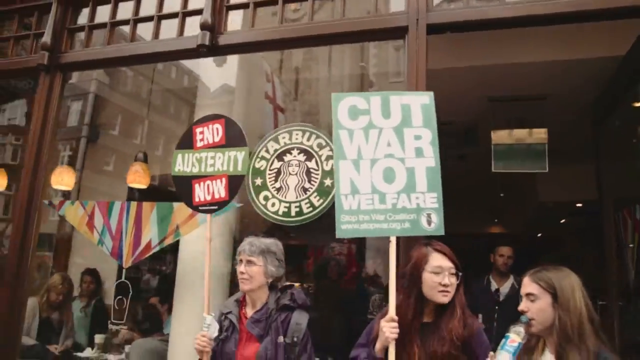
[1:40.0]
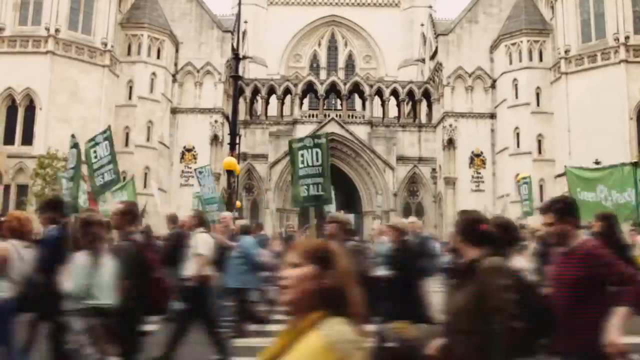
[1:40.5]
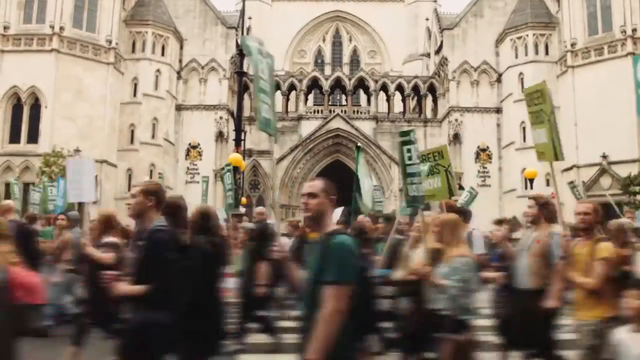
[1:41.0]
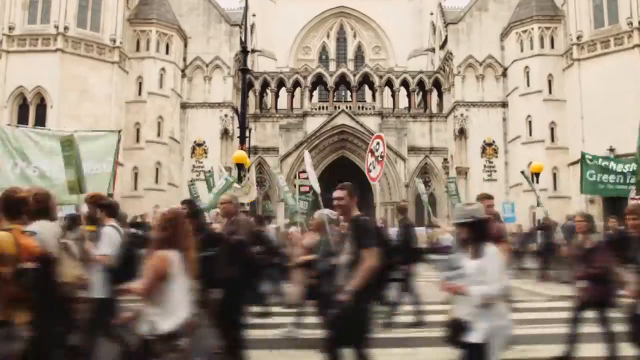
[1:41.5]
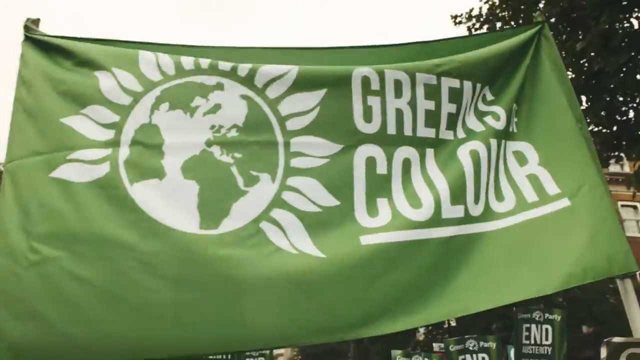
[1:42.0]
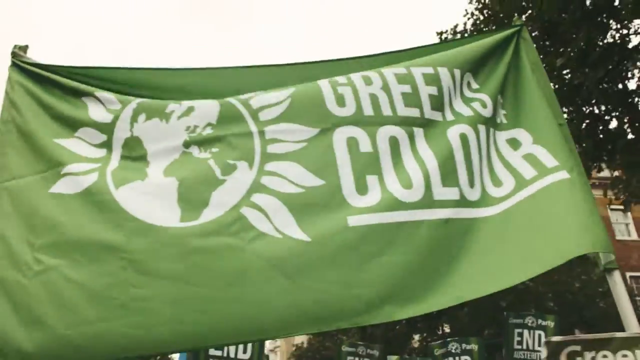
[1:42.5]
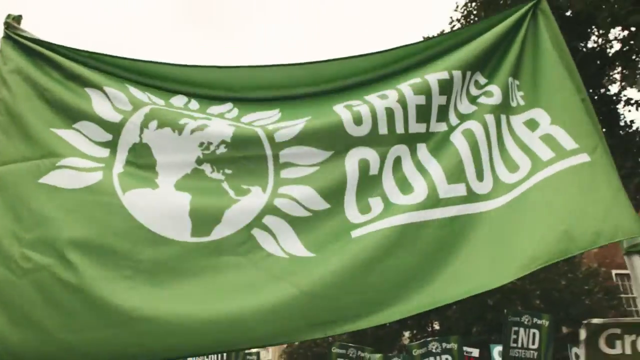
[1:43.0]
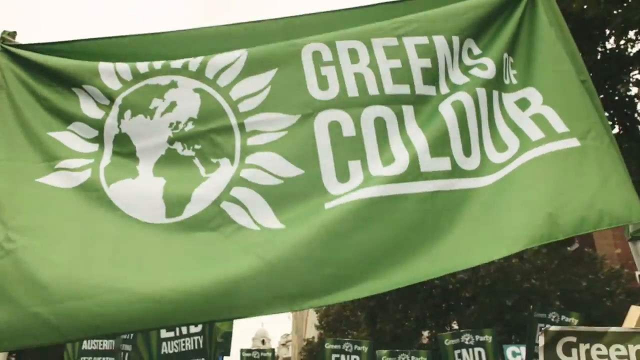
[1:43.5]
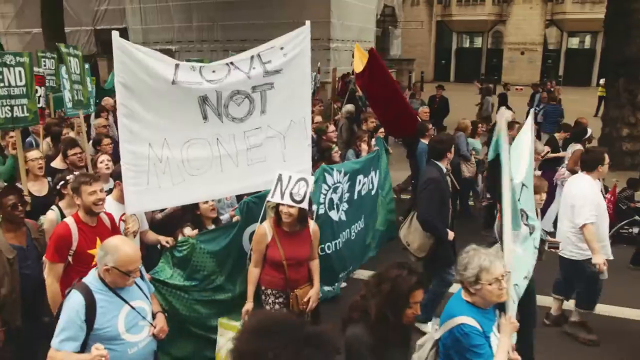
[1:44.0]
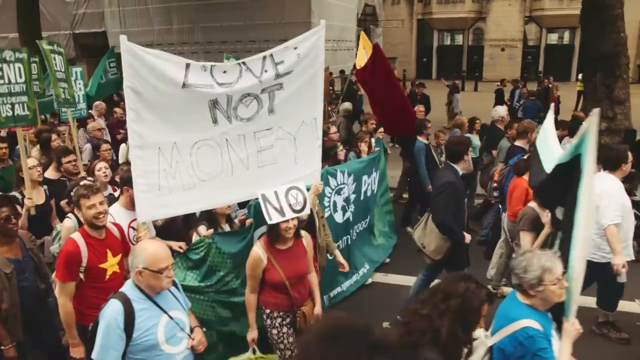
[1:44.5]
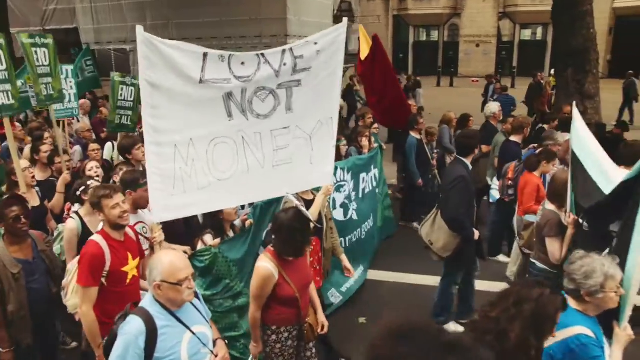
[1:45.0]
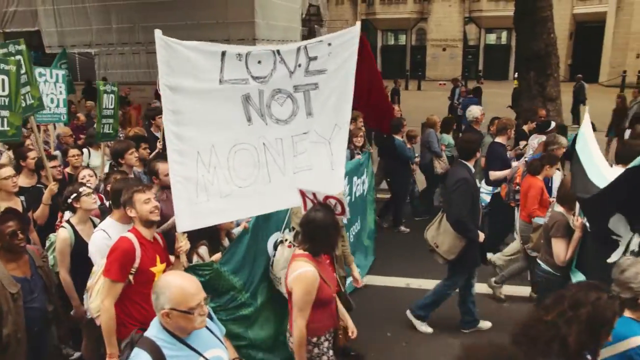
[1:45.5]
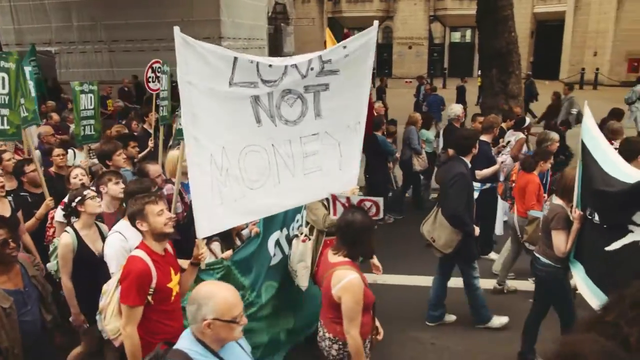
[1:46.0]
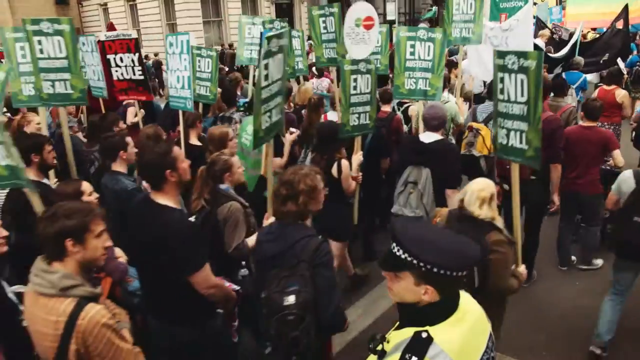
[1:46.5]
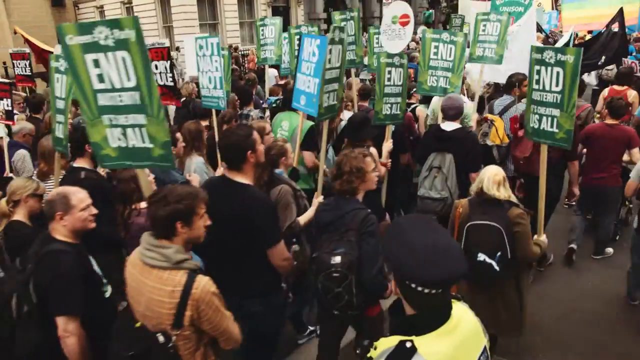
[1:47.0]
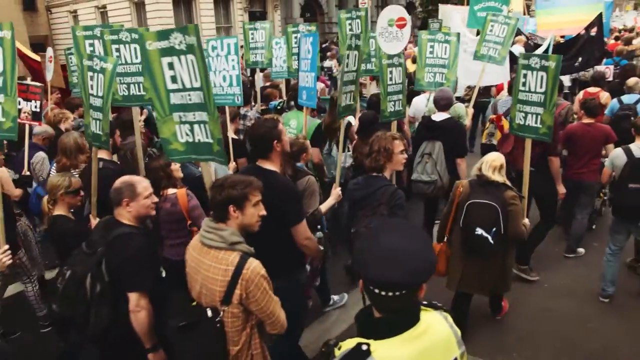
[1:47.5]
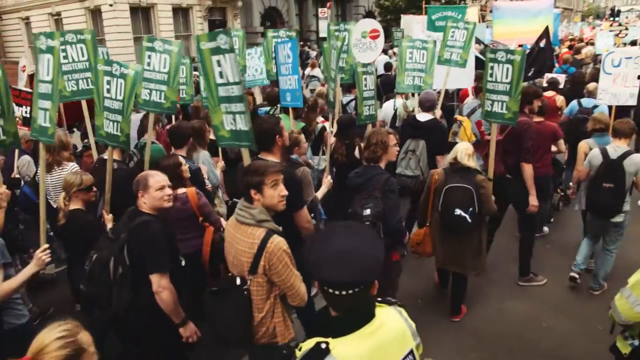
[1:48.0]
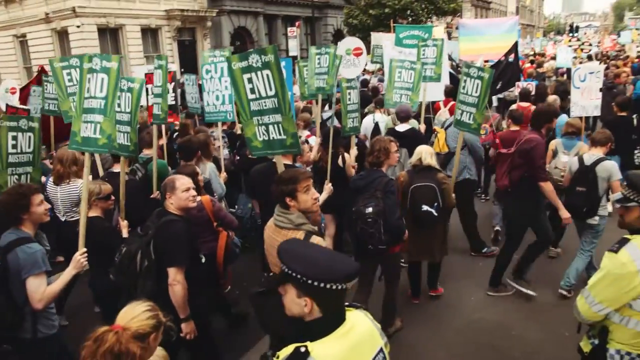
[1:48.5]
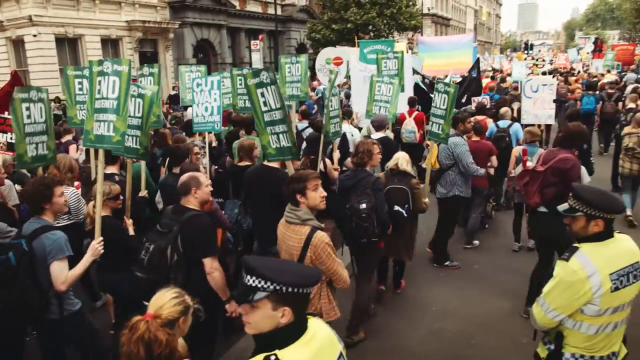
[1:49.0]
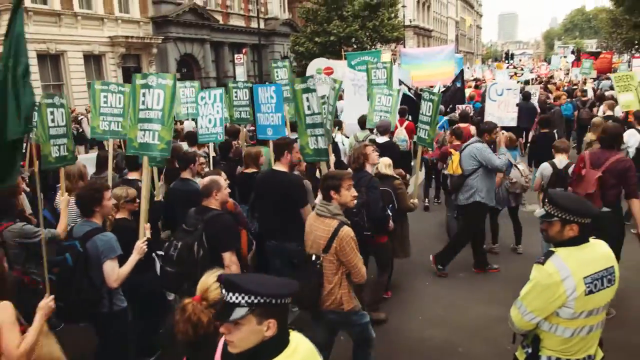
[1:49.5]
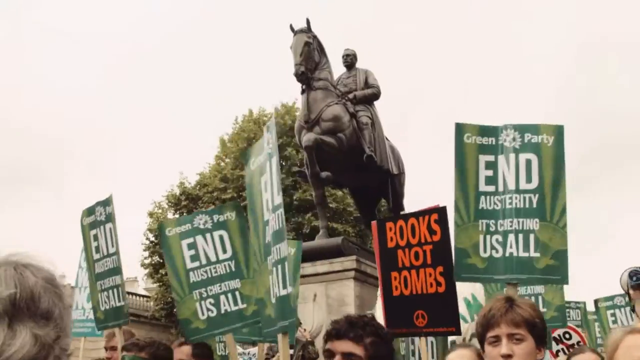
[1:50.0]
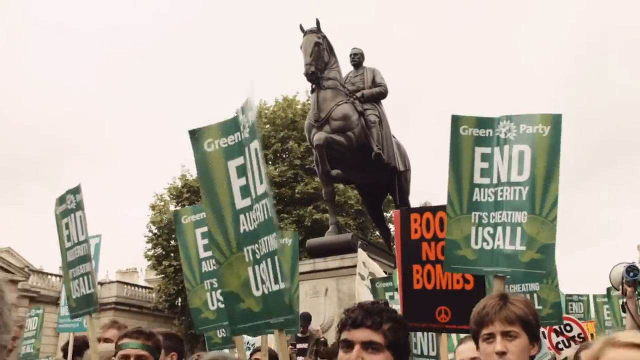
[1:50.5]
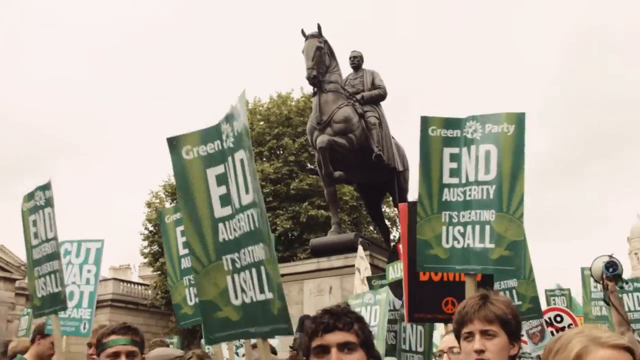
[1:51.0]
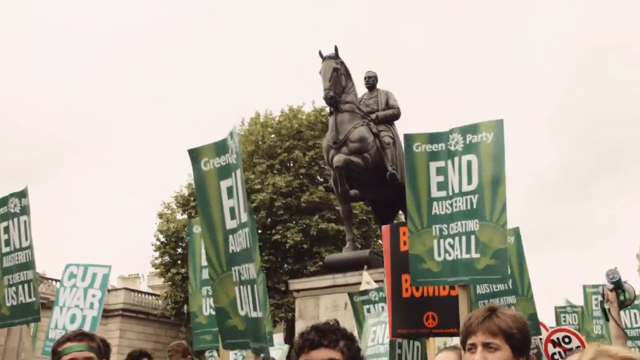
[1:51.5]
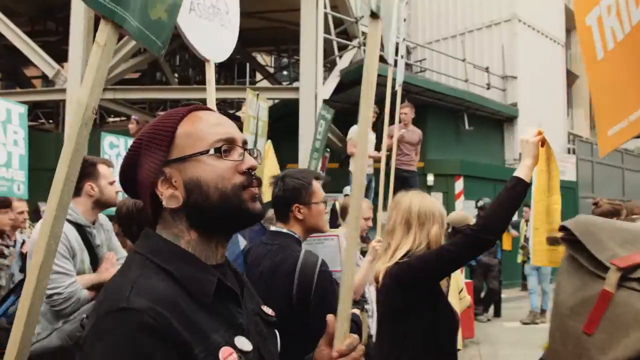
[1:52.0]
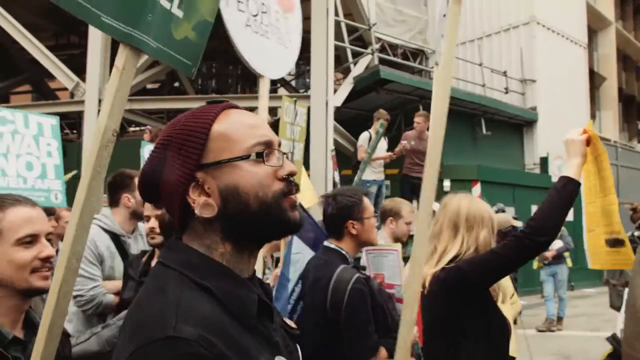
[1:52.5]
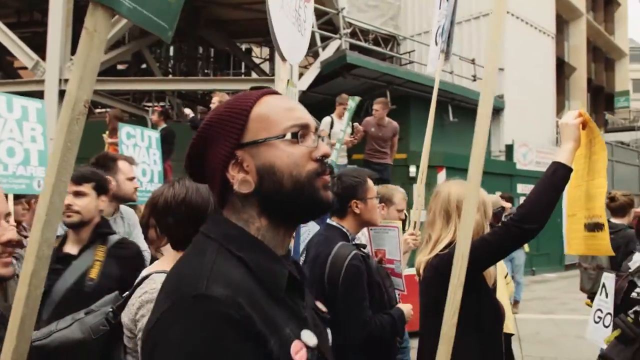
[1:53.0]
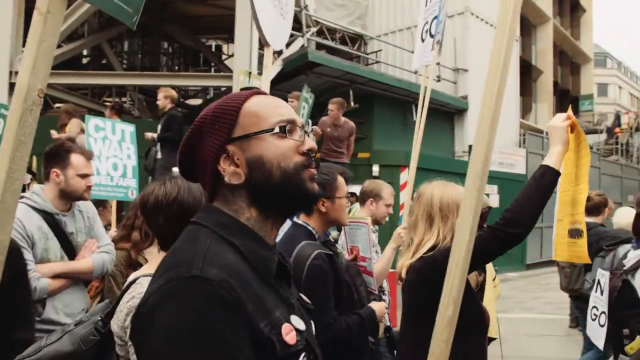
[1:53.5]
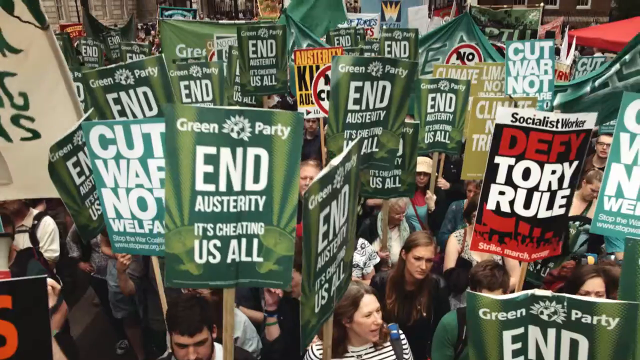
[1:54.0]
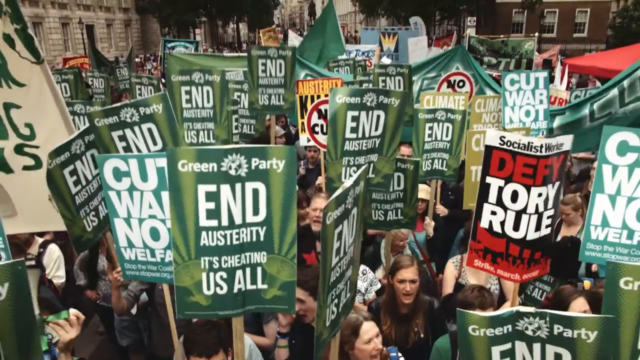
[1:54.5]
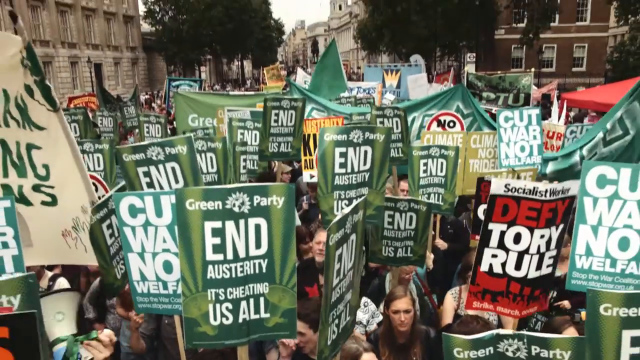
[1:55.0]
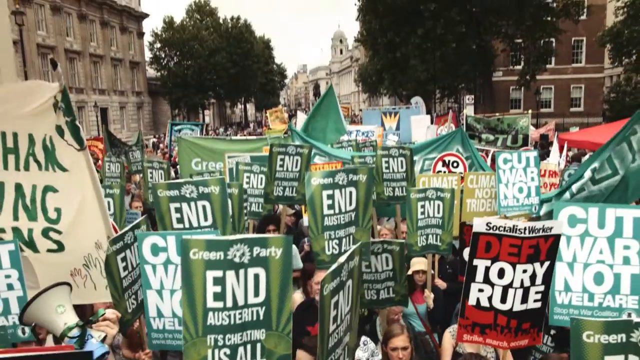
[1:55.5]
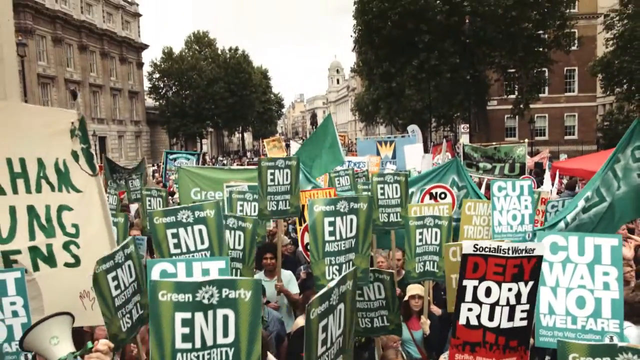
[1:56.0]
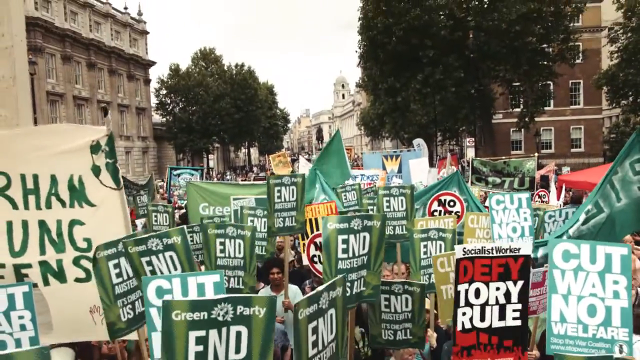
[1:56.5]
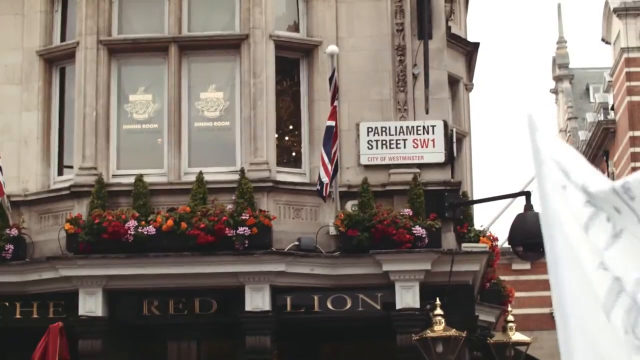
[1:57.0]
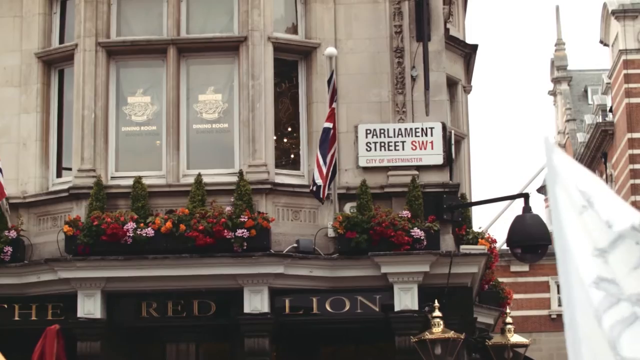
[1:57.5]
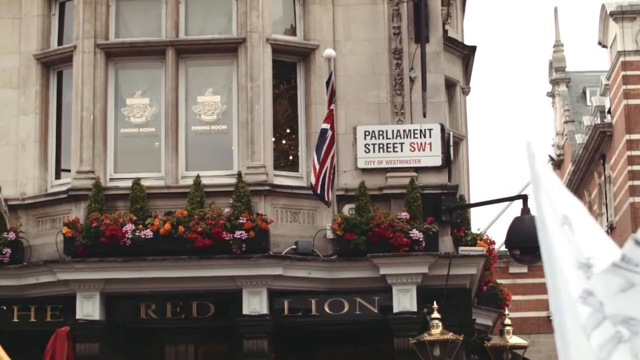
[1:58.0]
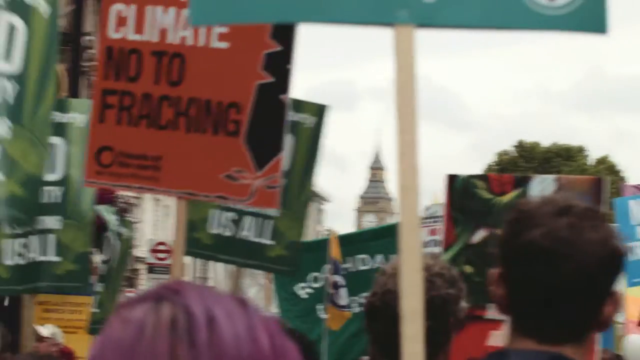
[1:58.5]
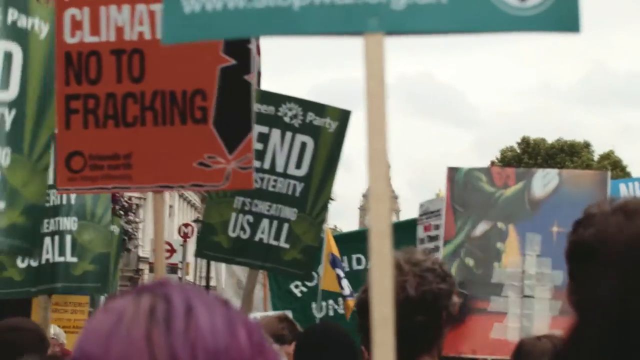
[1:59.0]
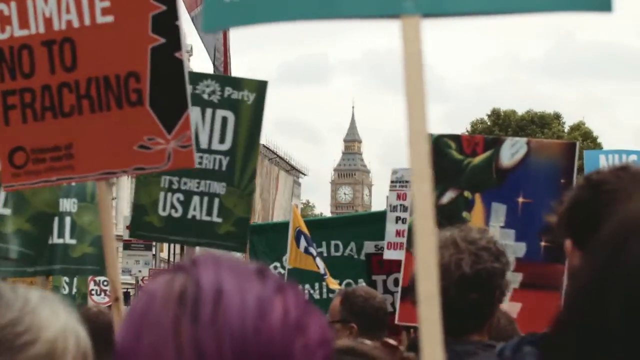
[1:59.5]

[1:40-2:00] More people holding signs are in front of a Starbucks coffee outlet. What appears to be a sticker on the Starbucks' mirrored facade reads "end austerity now." Another card reading "cut war, not welfare" is held by someone who looks Asian, with dark red hair, possibly mahogany. The video is sped up. Many people march past one after another holding Green Party "end austerity" cards. In the background is a building that looks like an old castle, probably a university, apparently in London. A huge green cloth tarpaulin shows an illustration of a globe adorned with leaves and reads "greens of colour" in white font, with "colour" underlined, on a green background.